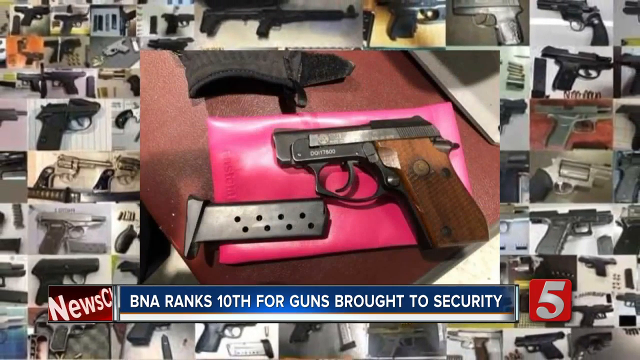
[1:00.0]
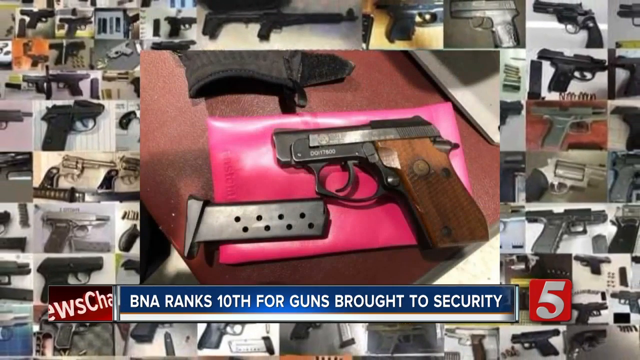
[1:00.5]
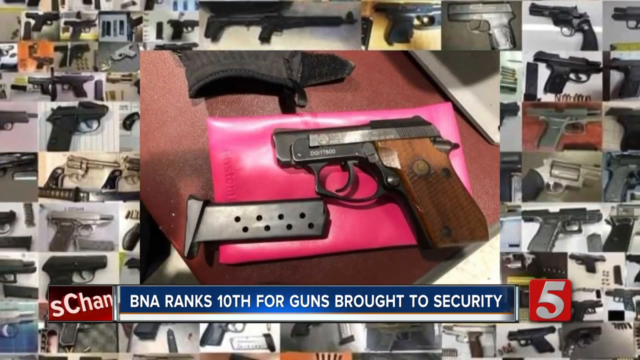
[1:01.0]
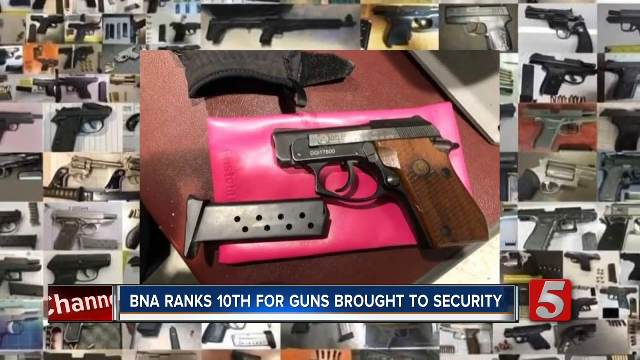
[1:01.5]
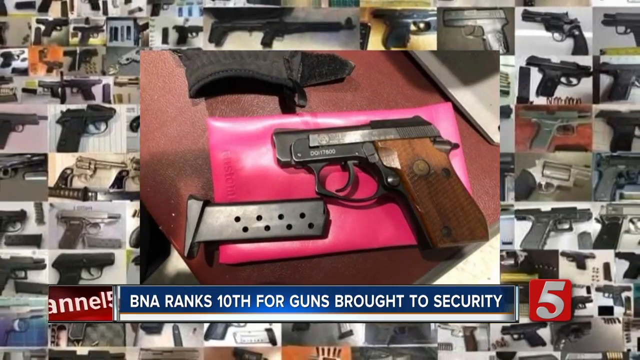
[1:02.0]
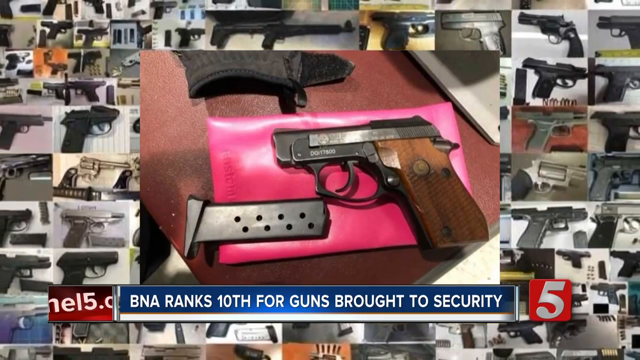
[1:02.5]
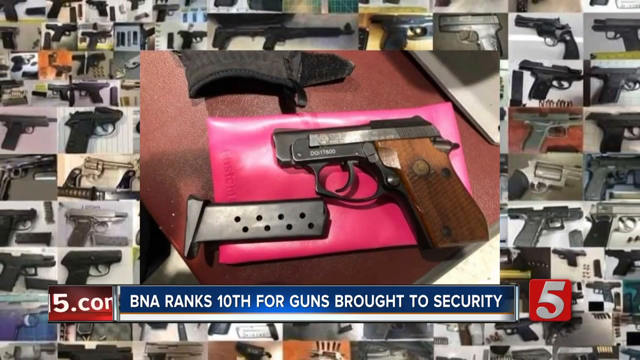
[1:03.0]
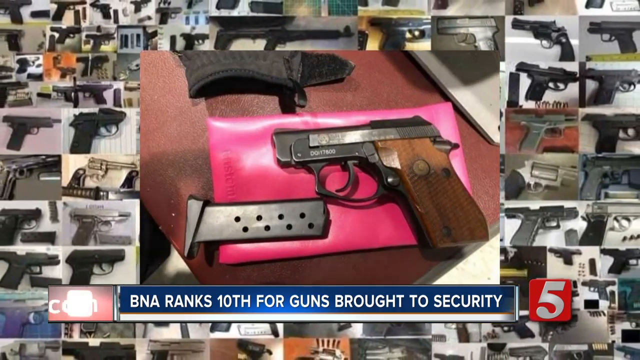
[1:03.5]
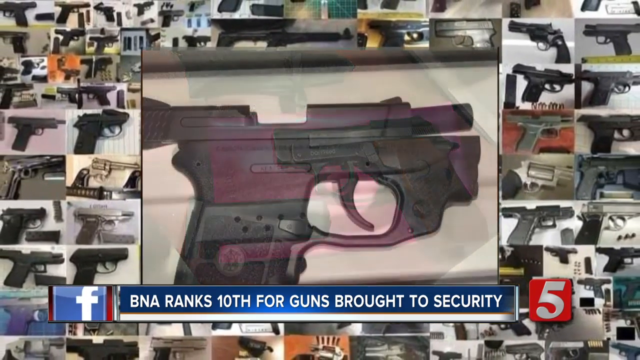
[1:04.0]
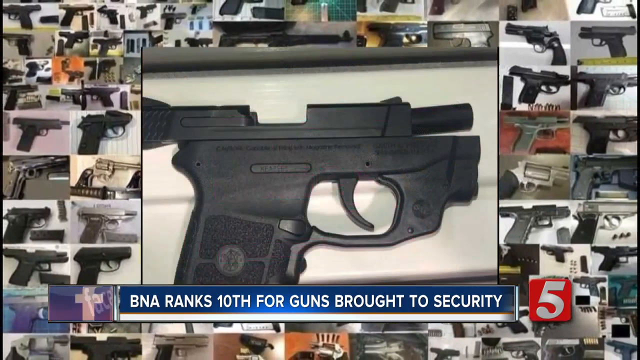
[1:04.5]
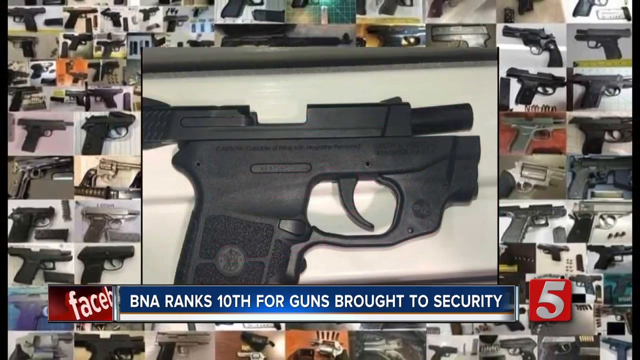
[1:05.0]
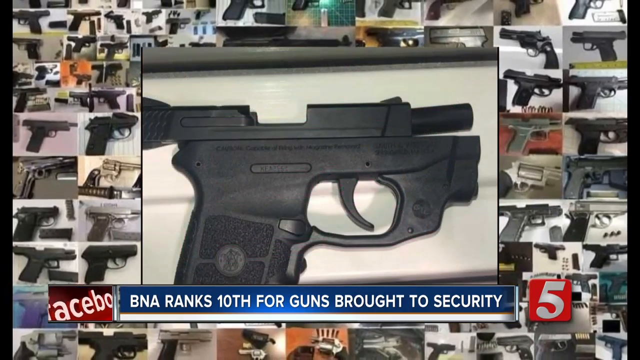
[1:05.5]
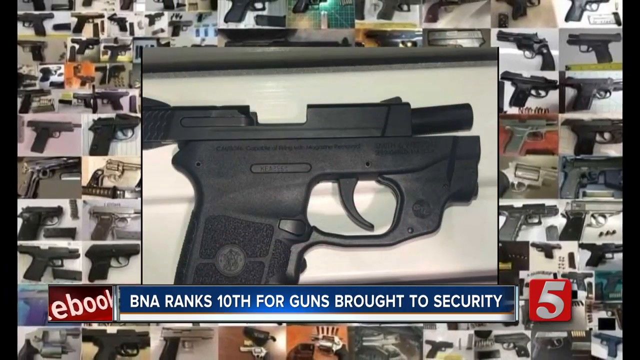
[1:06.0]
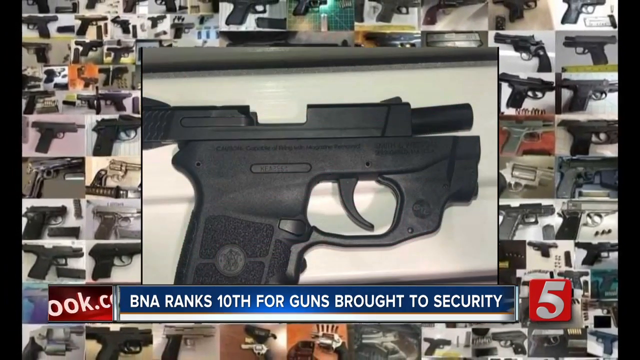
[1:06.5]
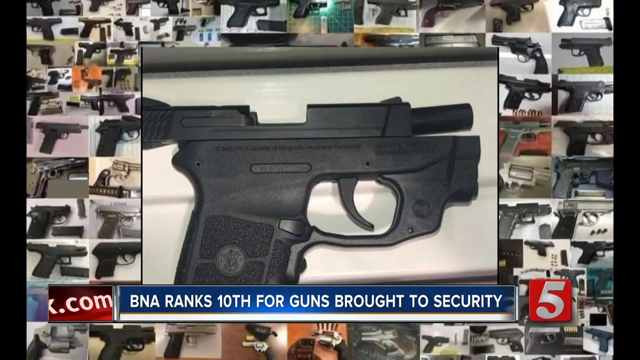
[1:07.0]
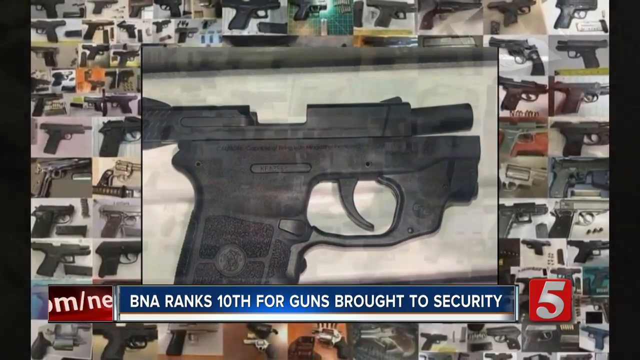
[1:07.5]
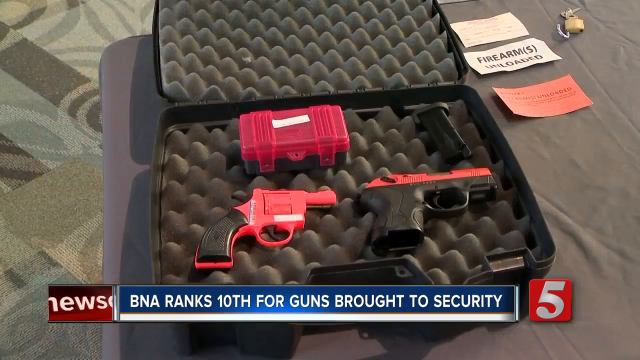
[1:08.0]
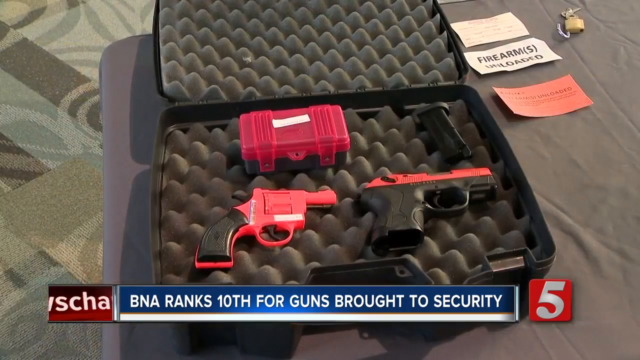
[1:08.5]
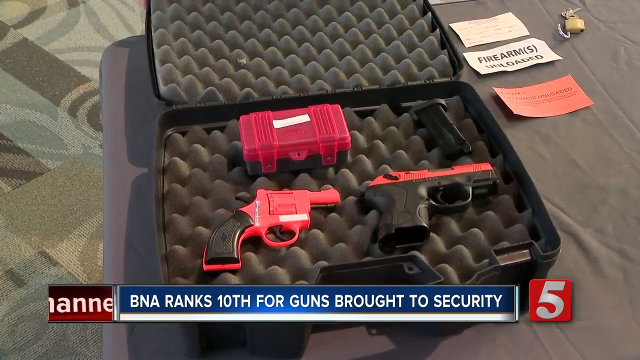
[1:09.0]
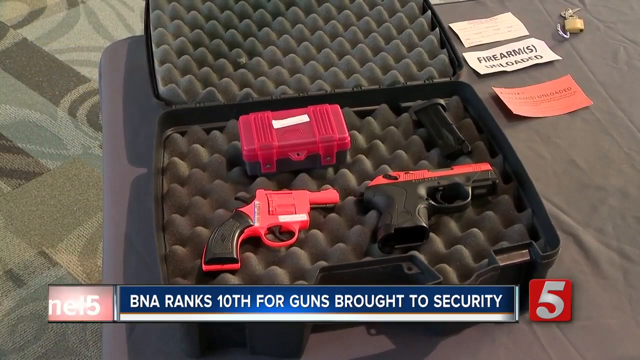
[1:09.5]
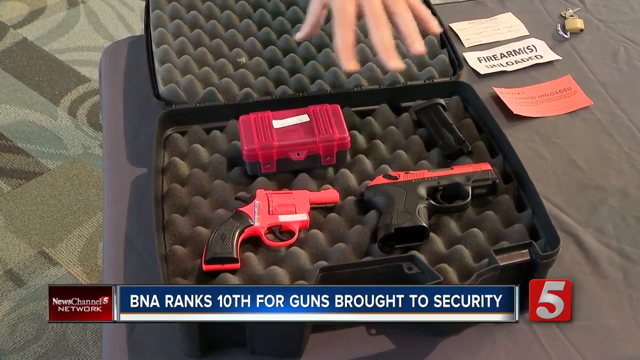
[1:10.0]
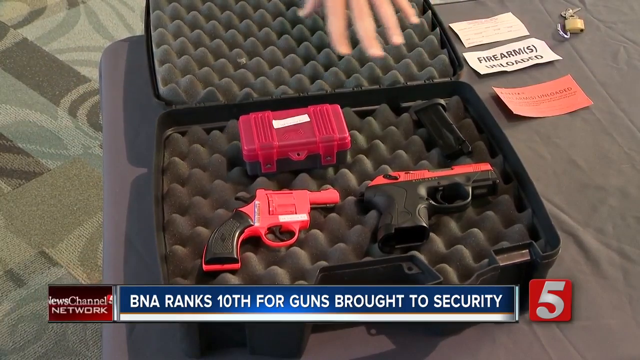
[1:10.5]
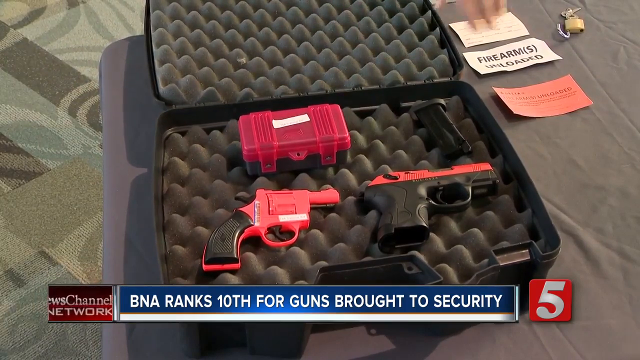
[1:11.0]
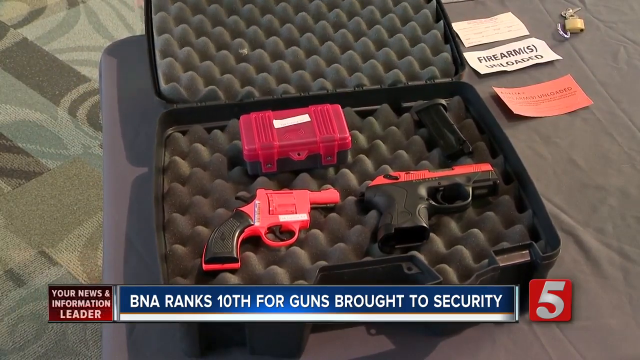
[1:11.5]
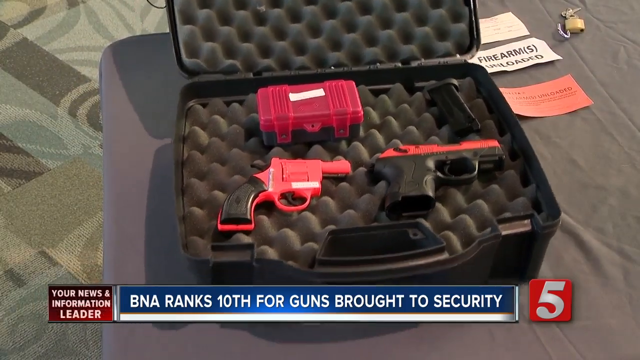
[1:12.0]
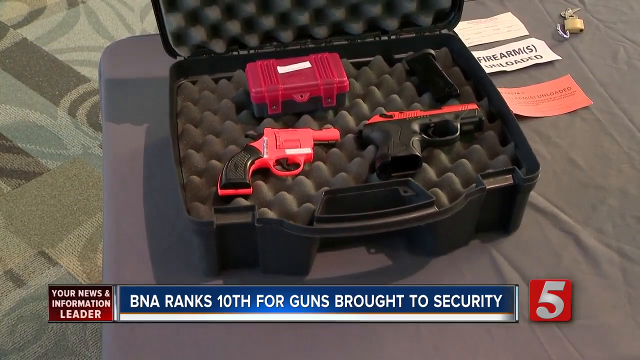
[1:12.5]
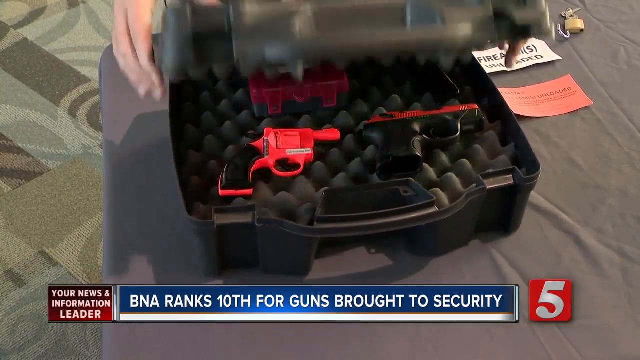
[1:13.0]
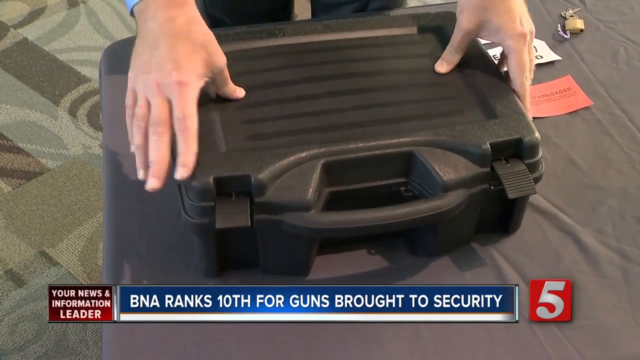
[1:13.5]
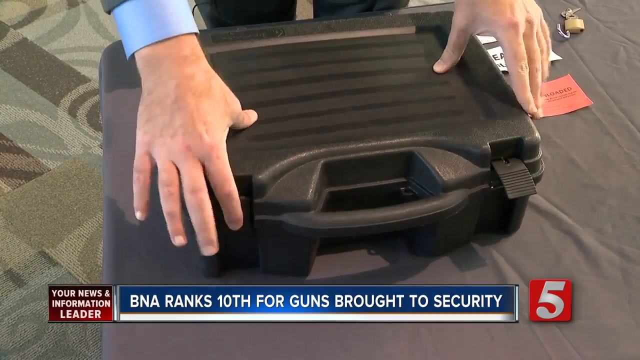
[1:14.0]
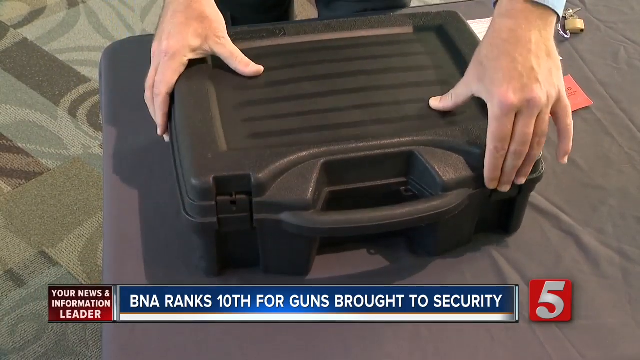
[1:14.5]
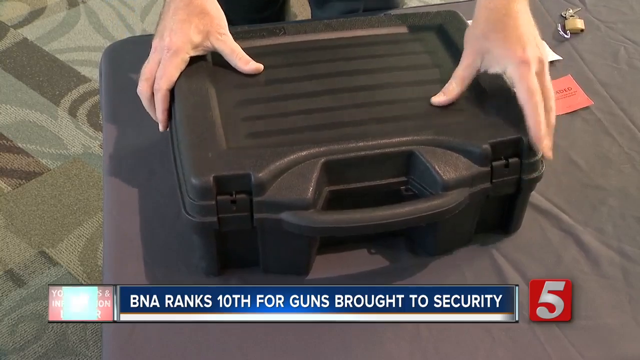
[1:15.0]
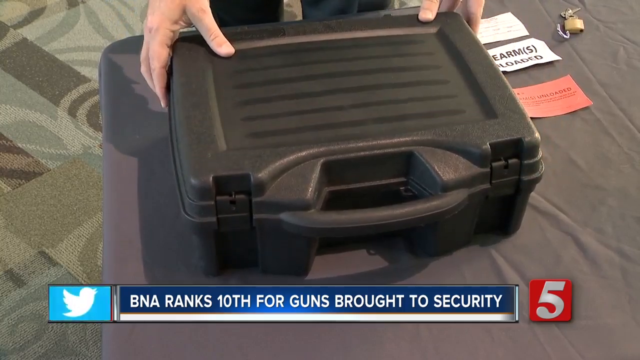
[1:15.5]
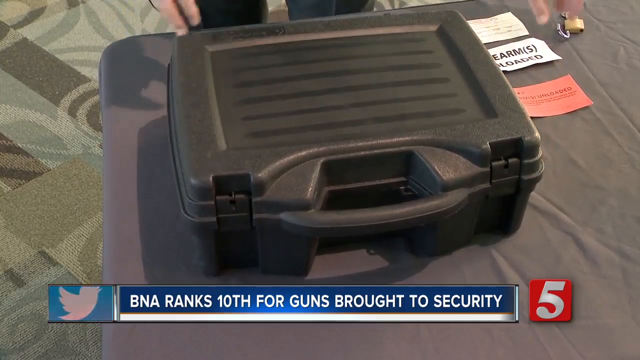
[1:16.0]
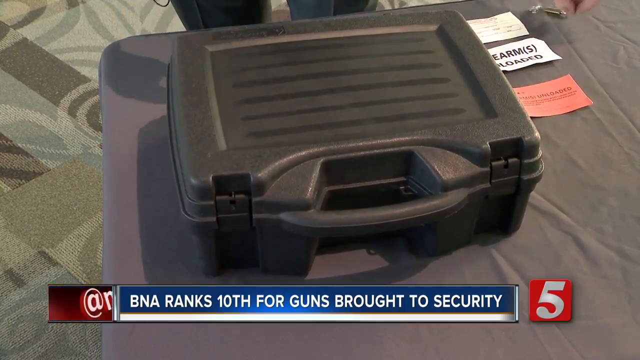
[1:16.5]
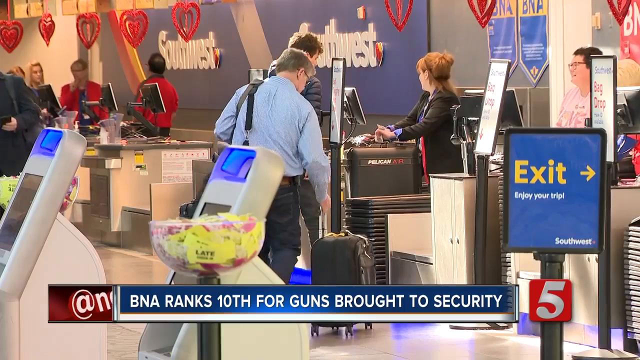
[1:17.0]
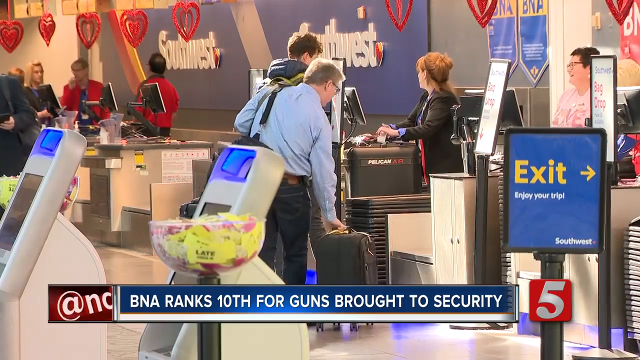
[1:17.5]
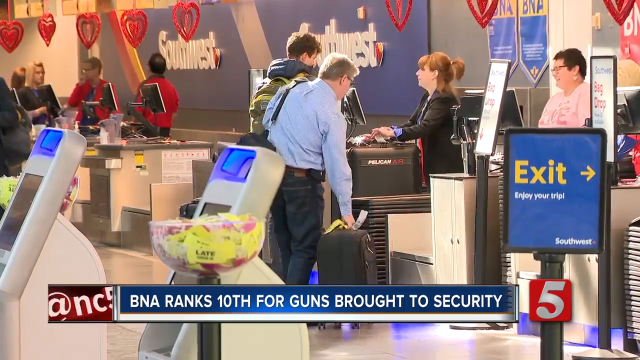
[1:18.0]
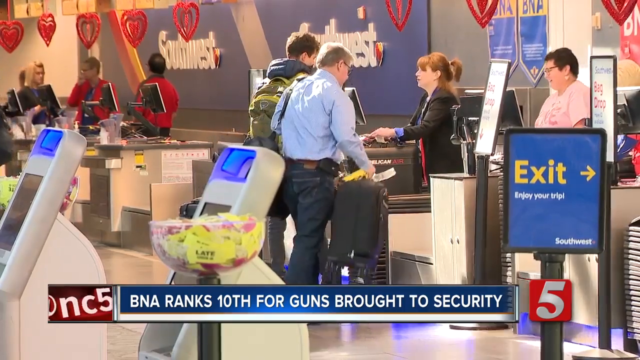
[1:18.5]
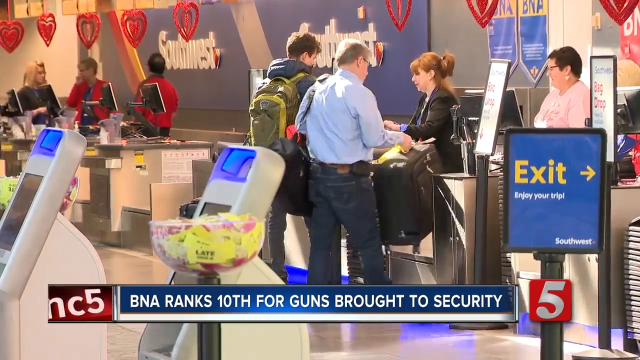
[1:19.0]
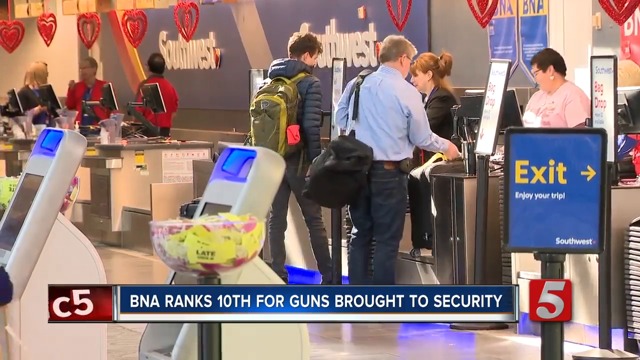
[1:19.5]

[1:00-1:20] Guns taken from passengers by security are loaded into a black suitcase. It is shown that BNA ranked 10th for guns brought to security.